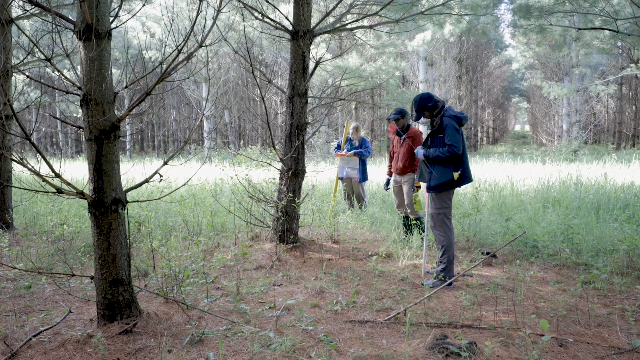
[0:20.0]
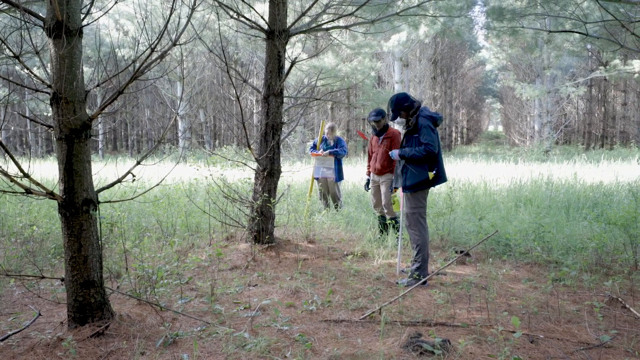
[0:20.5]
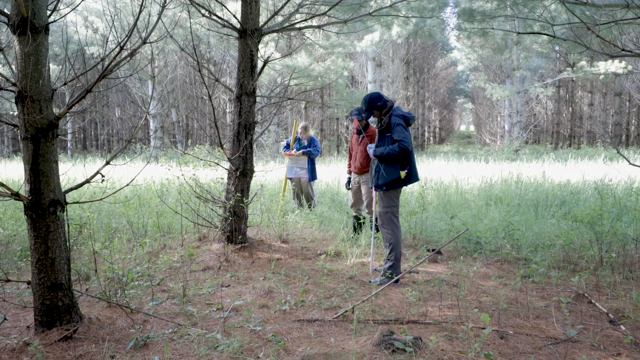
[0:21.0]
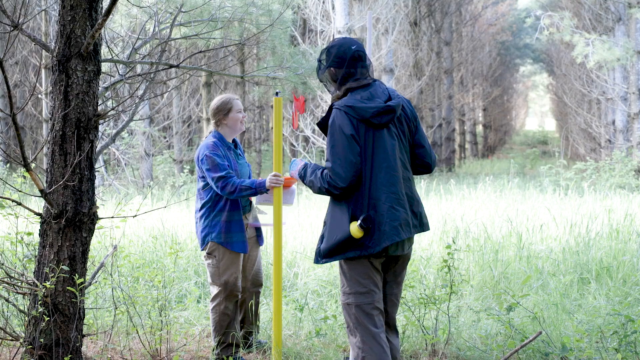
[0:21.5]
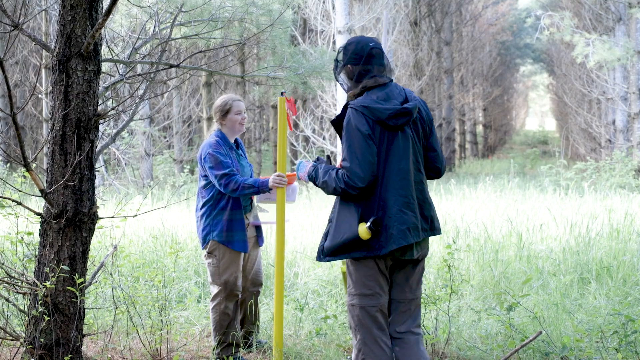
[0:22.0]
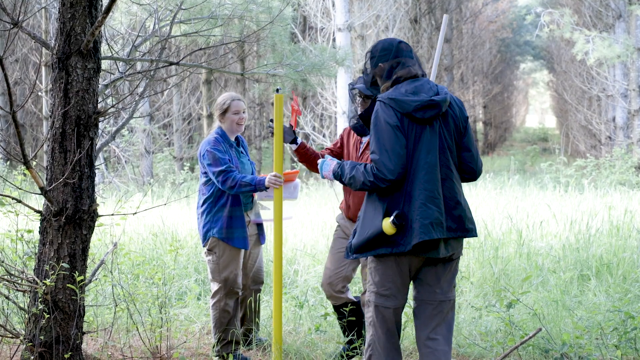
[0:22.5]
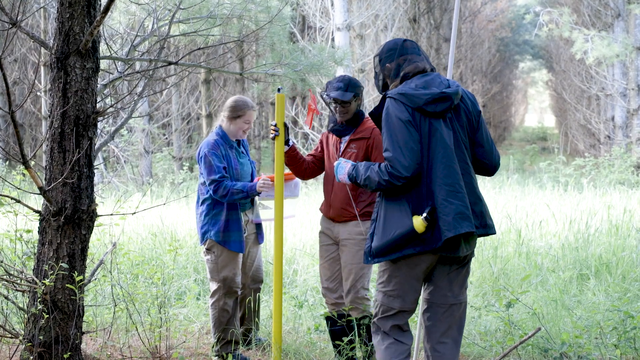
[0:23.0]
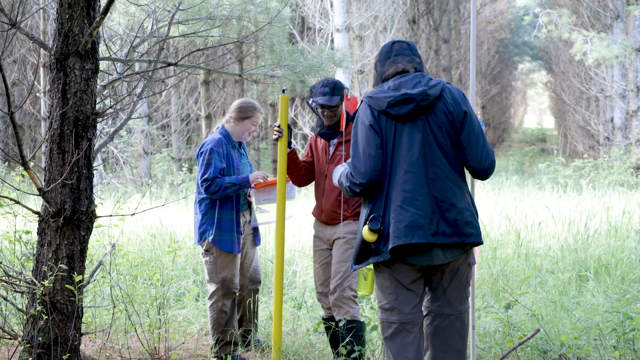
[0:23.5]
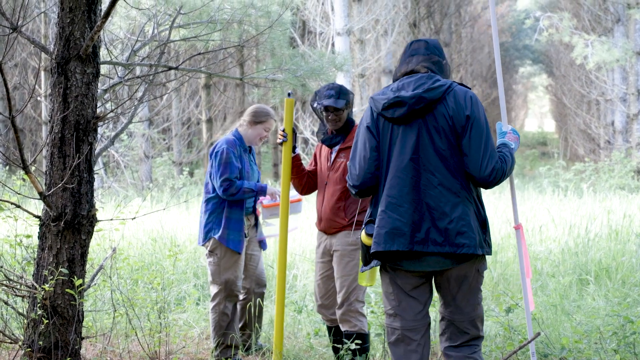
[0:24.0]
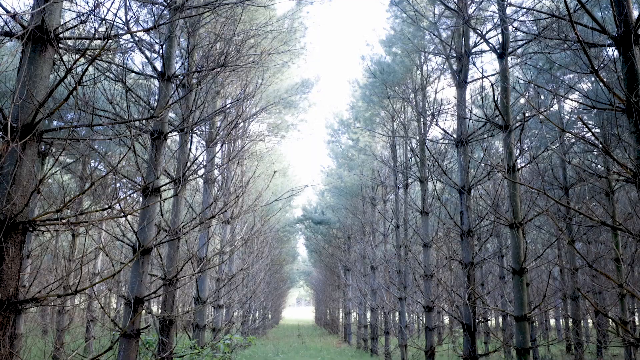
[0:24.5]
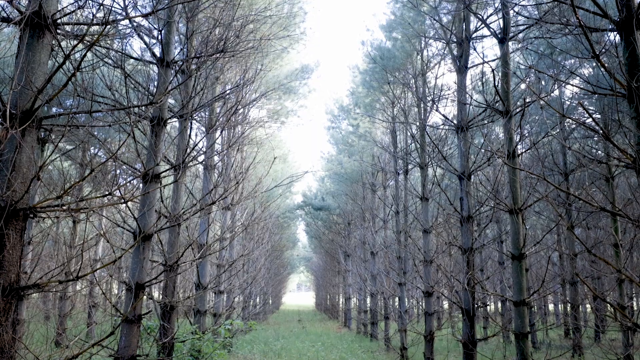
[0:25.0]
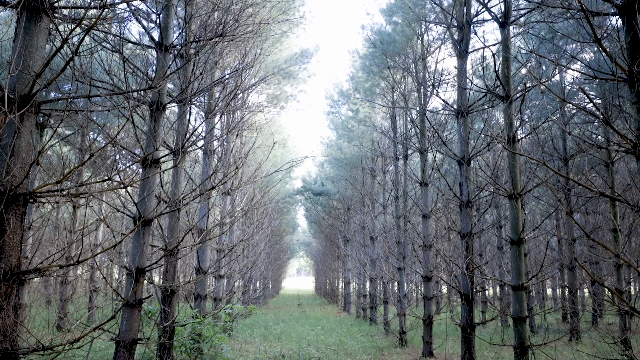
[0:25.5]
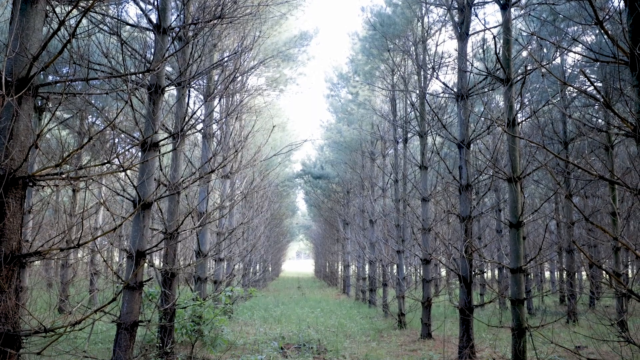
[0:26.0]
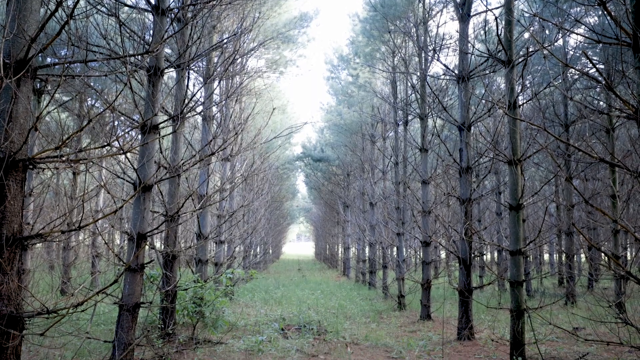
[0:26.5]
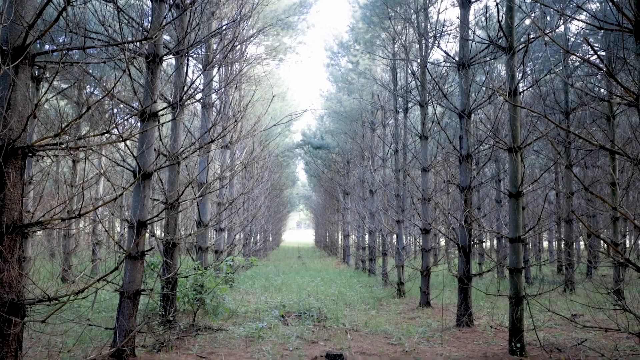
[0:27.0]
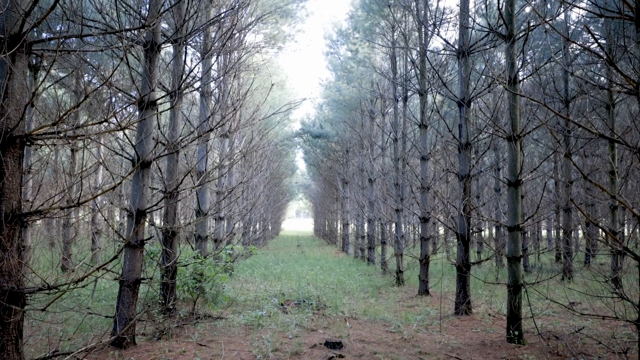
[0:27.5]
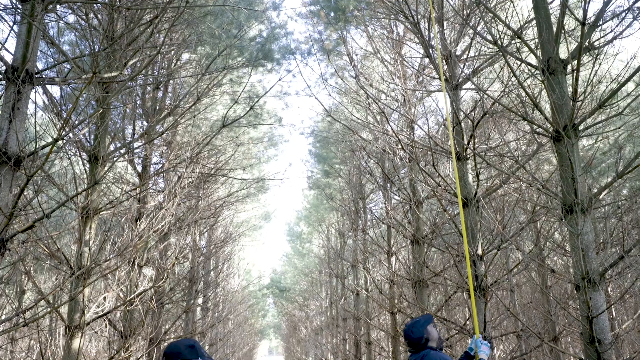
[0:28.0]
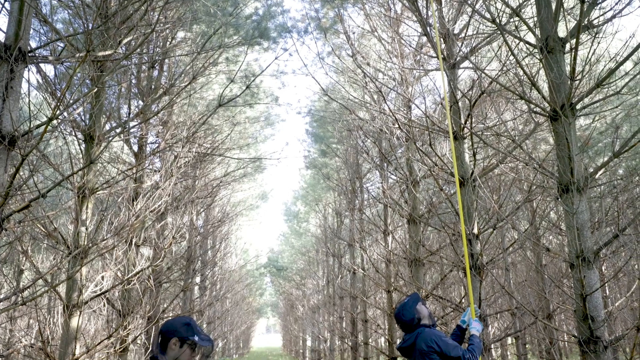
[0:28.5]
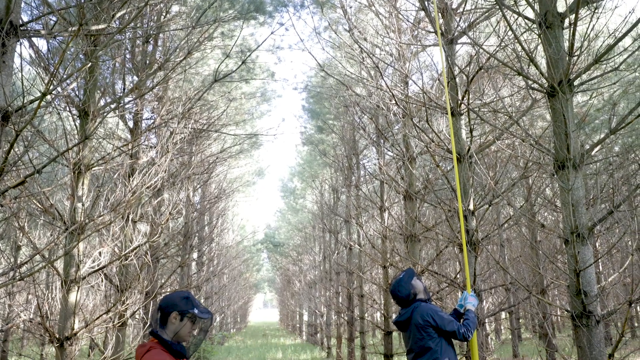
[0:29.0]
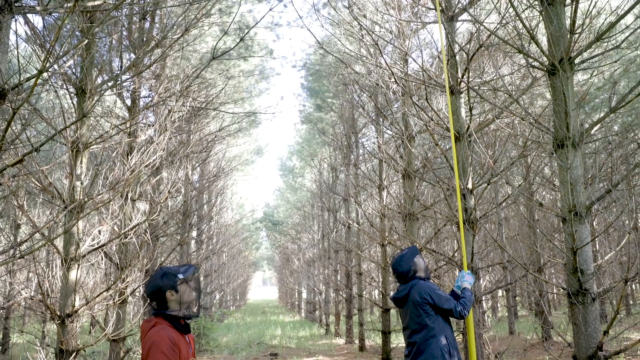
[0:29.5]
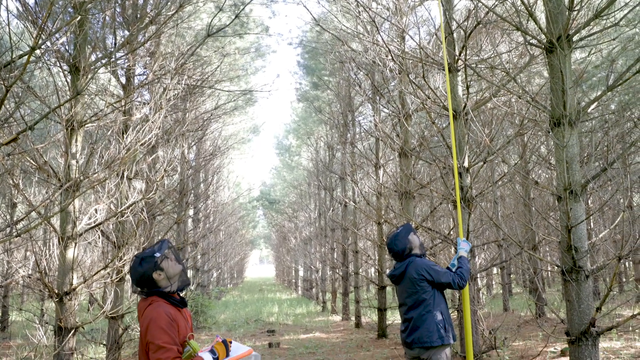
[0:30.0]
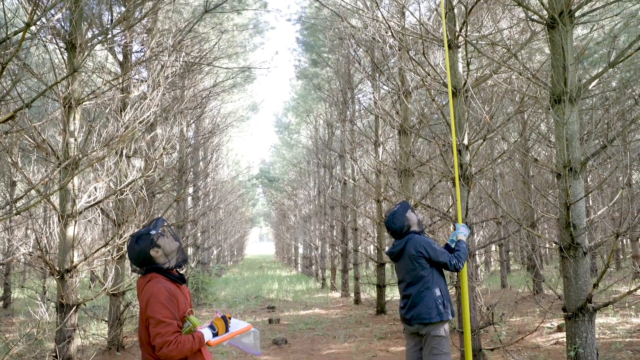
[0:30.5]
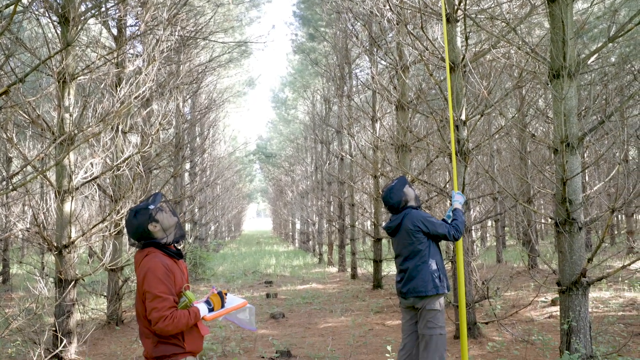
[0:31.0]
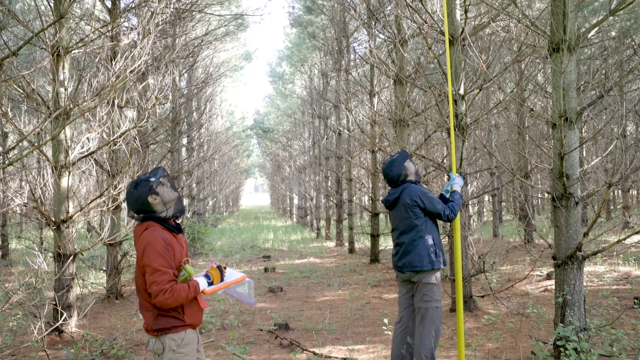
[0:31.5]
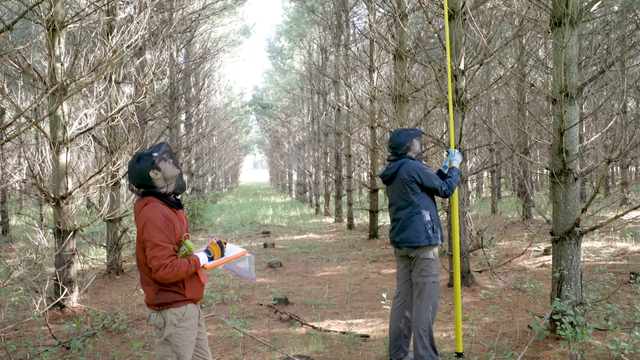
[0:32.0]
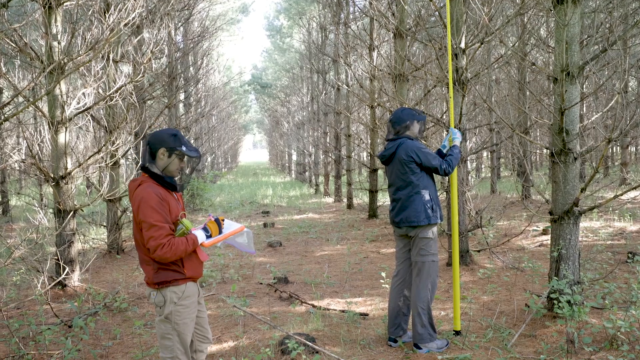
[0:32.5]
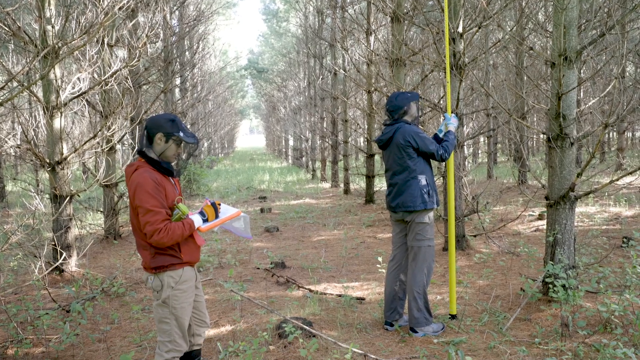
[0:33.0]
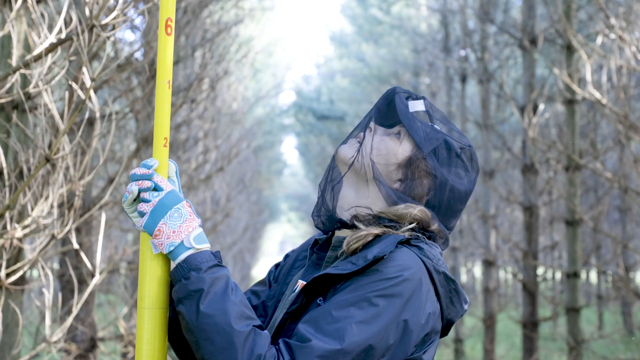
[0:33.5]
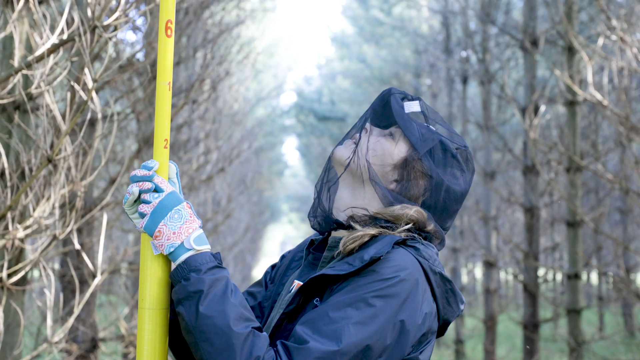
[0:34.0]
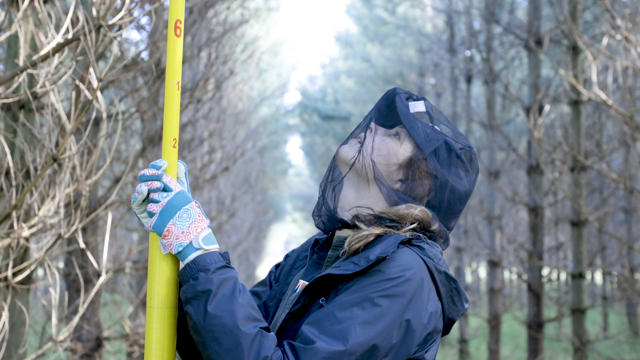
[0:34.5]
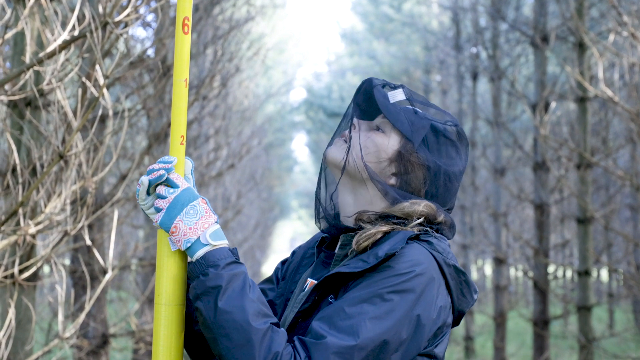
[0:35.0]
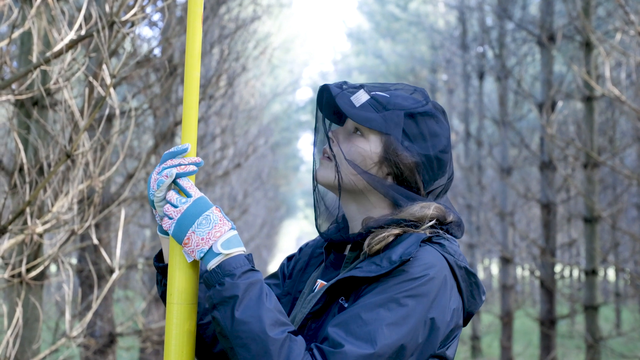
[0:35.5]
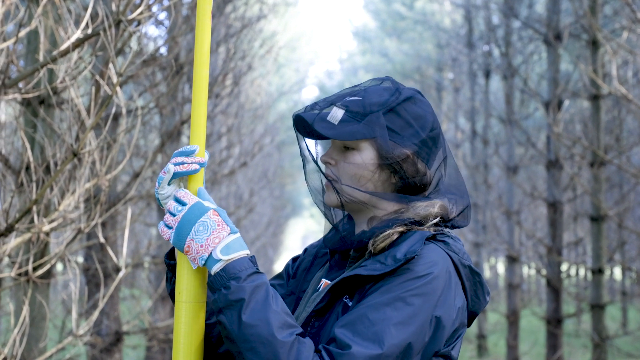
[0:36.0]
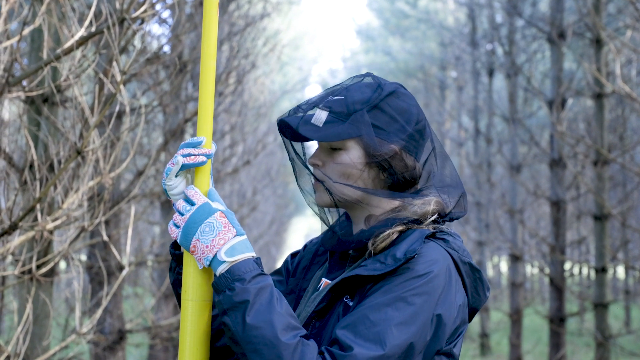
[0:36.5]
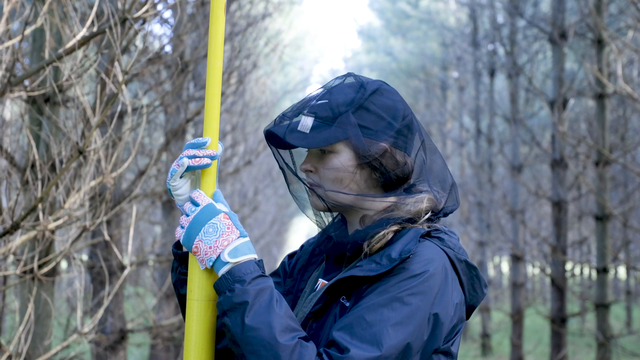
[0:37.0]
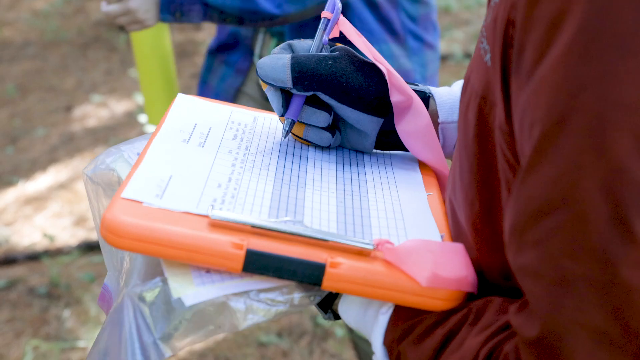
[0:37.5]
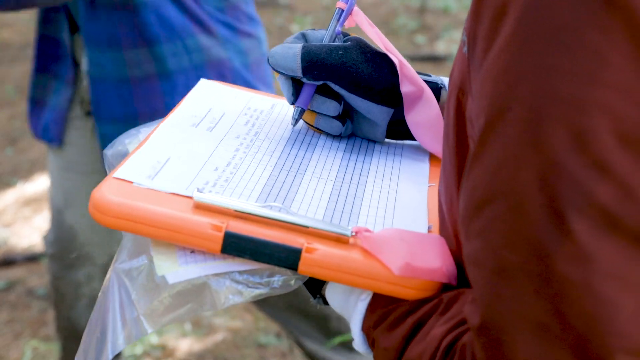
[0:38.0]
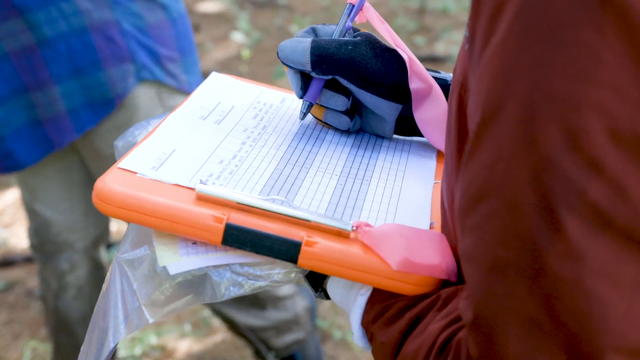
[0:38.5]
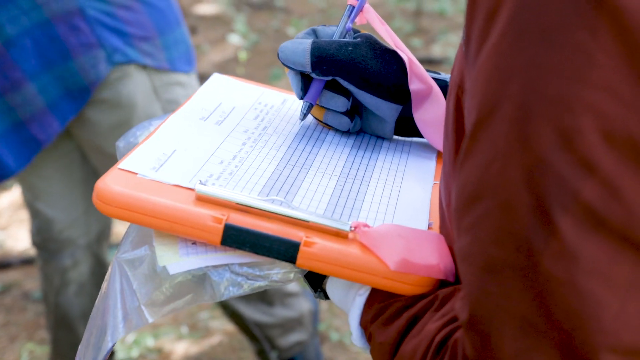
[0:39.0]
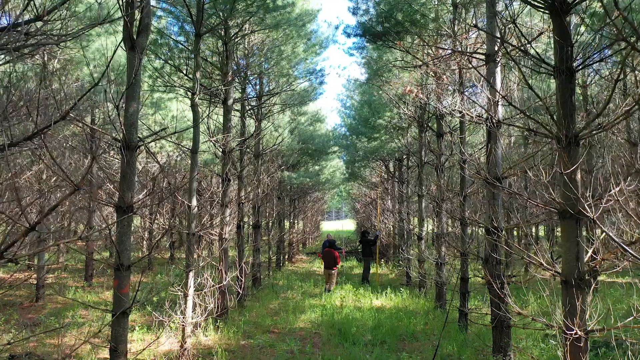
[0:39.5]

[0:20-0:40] Three people appear to be a man in a blue jacket, a man in a red jacket, and a woman in a blue jacket. The woman is in the middle, the man in the red jacket is to her right, and the man in the blue jacket is in the foreground to his right. The woman holds a long yellow stick. There are three trees, one in the middle and two on the left, and the people are standing, all facing the tree in the middle. The camera pans to the right, then the scene changes and zooms in on the three people. The woman holds the yellow stick with her right hand; the man in the red jacket comes up and holds it with his right hand, and she lets go. The man on the right holds a long white stick pointing away from the viewer and turns around. The video then shows a green pathway with tall trees on the left and right, placed and spaced very symmetrically, and the camera pans down slowly. Another shot appears to show the same path, again panning down from the top. The man in the red jacket looks upward and to the right. A man in a blue jacket holds a very long yellow measuring stick with both hands and seems to extend it upward while looking up at it. Next, the woman, in the middle of the frame, holds the yellow measuring stick with both hands, extending it and looking upward and to the left, with the path and trees on the left and right behind her; she then looks down at the measuring stick. The scene changes to what looks like the man in the red jacket: a red jacket is on the right side, a left hand is underneath an orange clipboard, and a right hand holds a pen, writing on a piece of paper on the clipboard. The scene then appears to return to the path, two lines of trees with grass in the middle, where the three people stand in the middle of the path and one of them holds the yellow stick vertically.